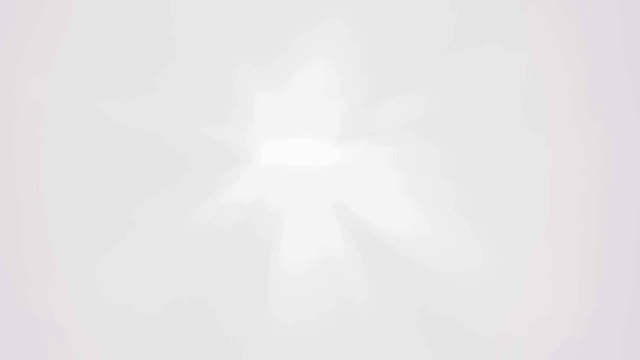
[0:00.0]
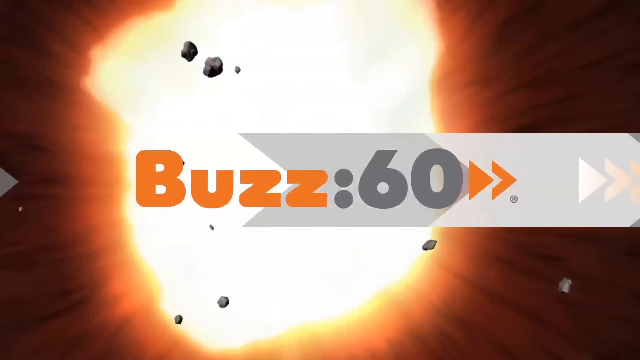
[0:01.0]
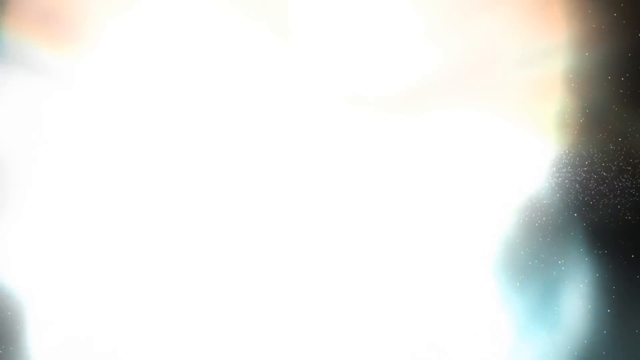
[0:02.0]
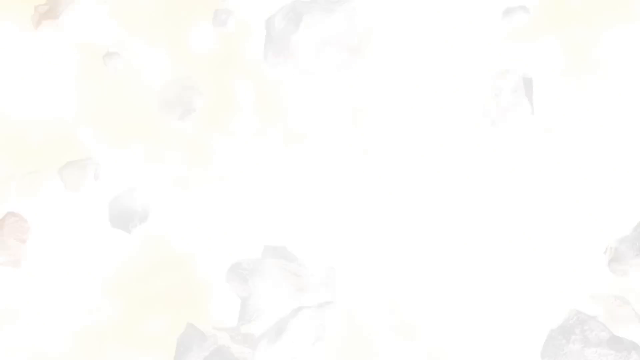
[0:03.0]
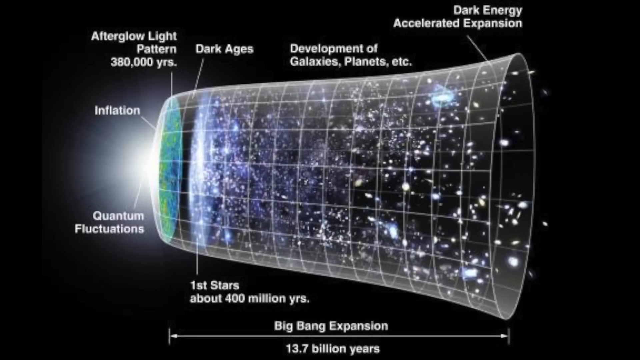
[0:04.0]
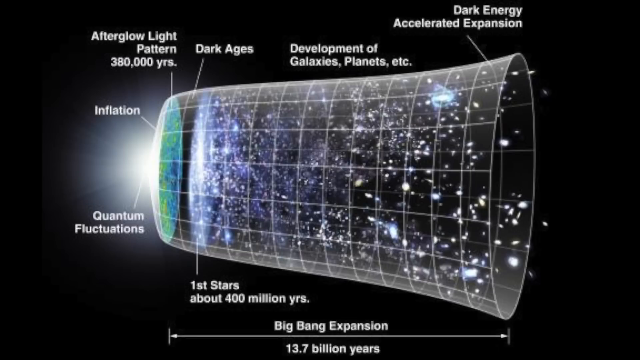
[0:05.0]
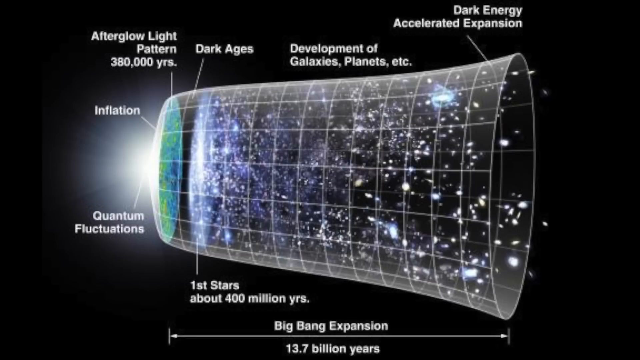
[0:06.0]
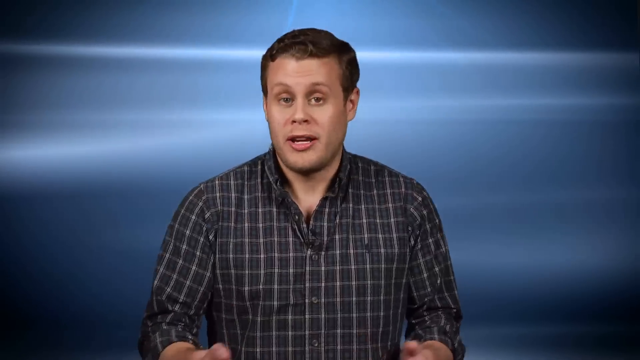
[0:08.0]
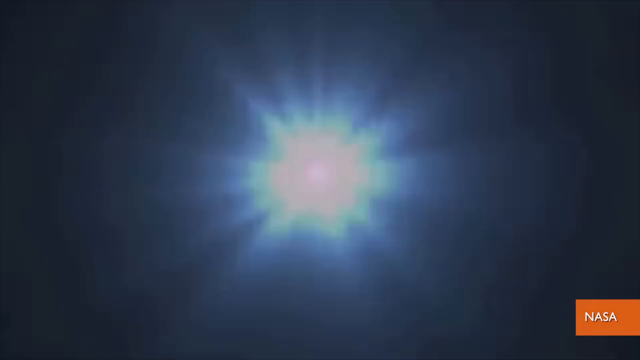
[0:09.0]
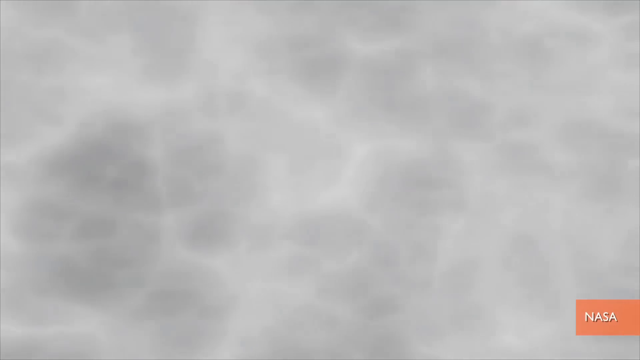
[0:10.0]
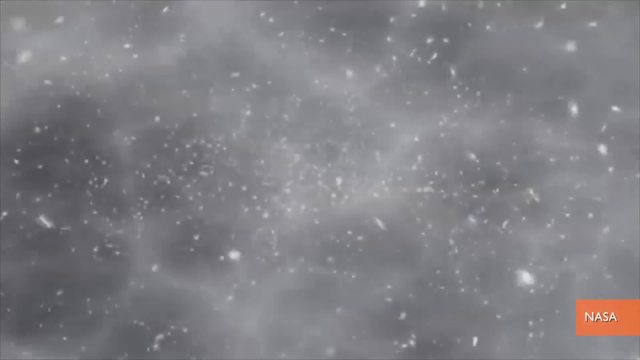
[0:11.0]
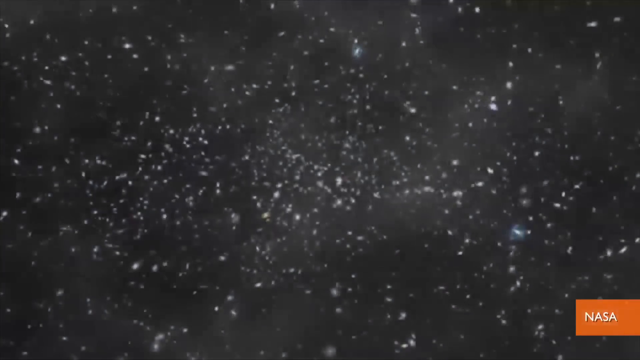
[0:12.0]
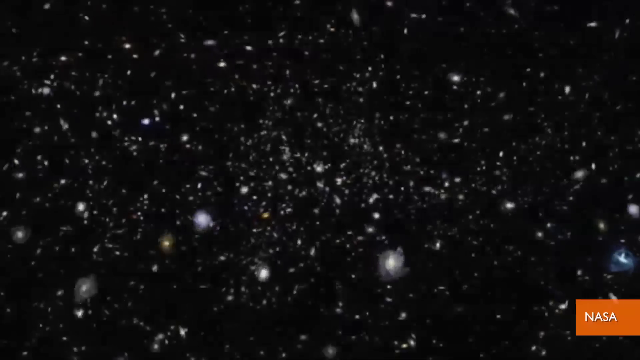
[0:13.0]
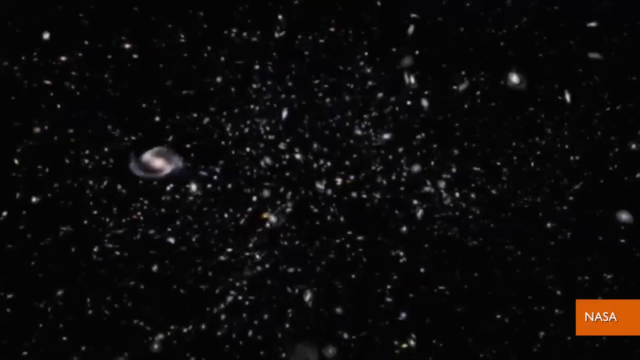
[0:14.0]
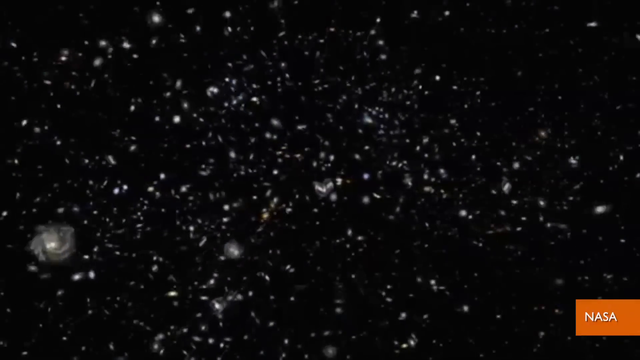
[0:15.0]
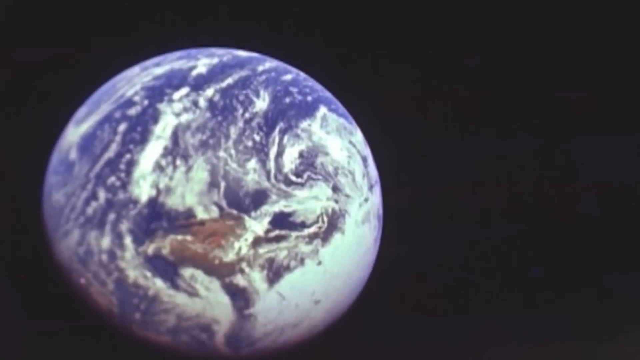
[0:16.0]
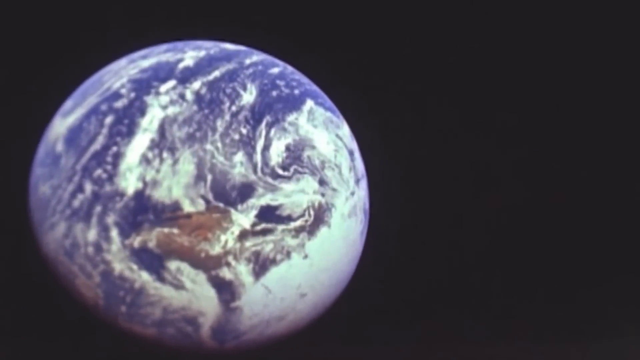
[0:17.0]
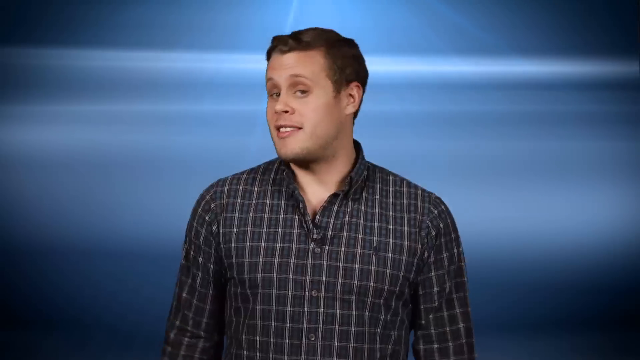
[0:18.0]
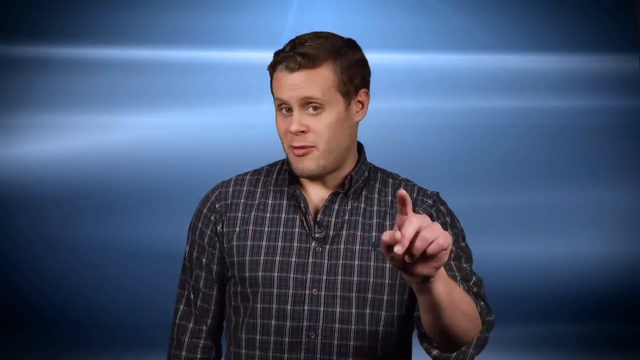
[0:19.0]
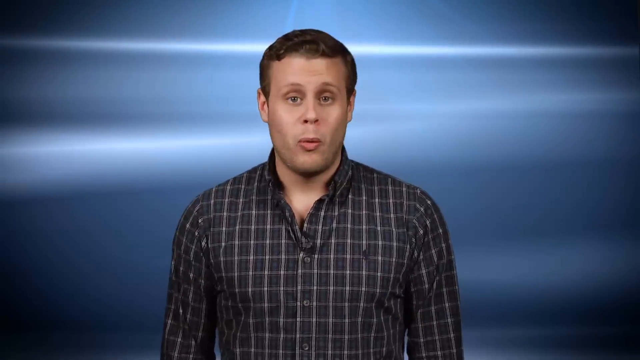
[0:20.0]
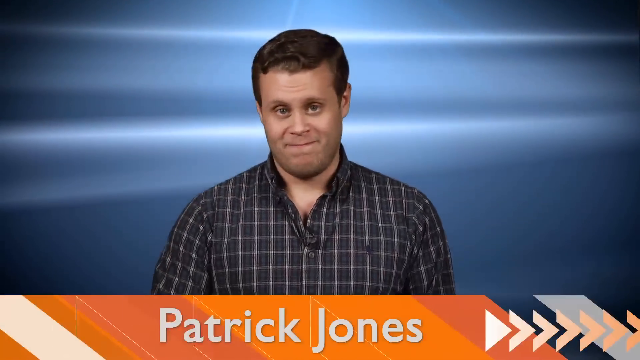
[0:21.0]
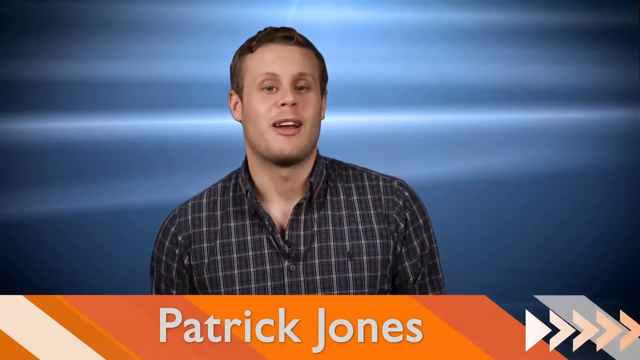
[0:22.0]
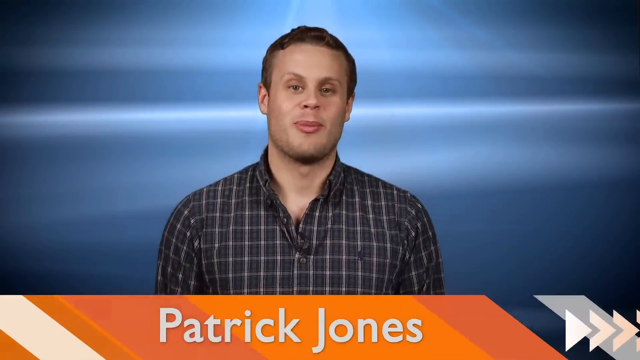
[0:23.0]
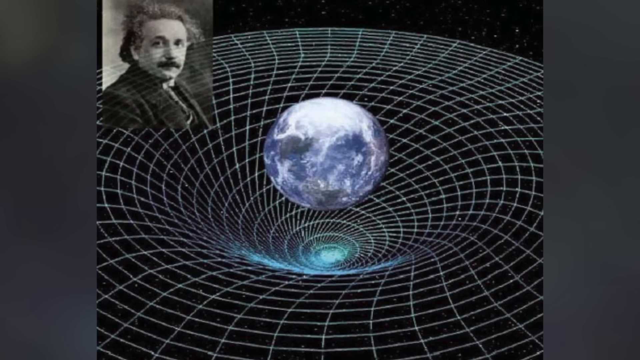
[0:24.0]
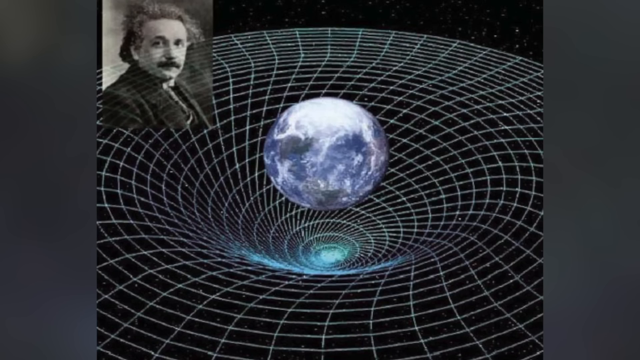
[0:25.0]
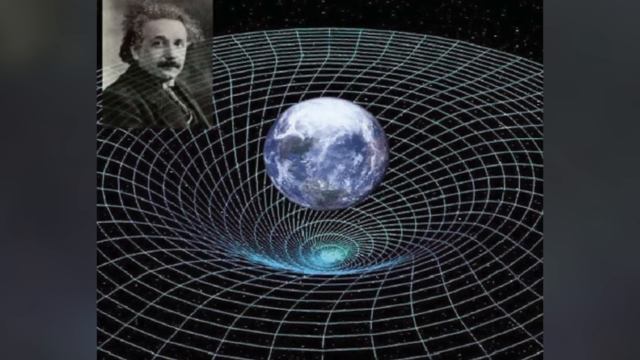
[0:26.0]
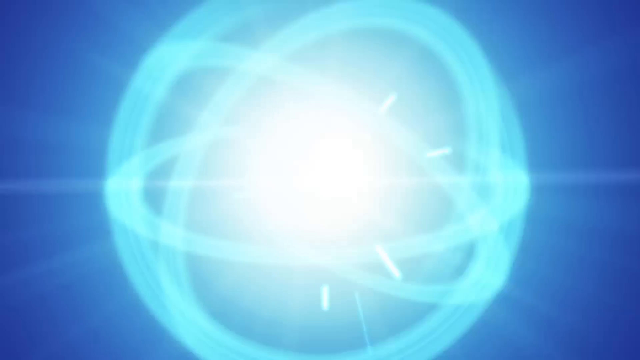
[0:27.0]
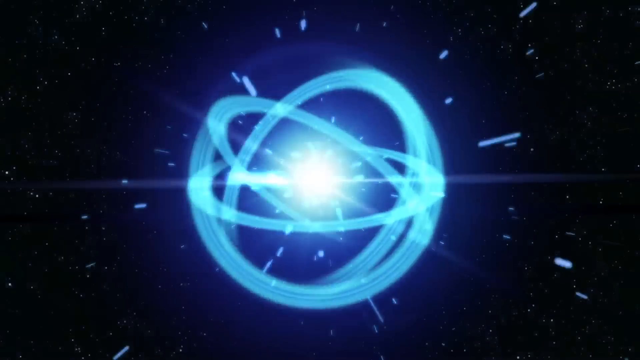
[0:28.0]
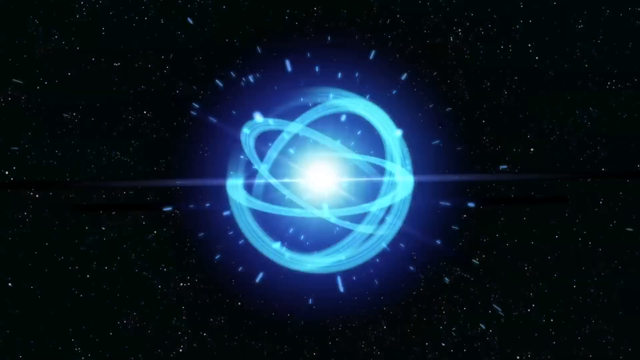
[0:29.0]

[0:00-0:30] The video comes via Buzz 60, and the Buzz 60 logo, which looks like an orange arrow, flashes across the screen. Next comes what looks to be an image of an explosion, followed by what appears to be a diagram showing some sort of development of the universe. The diagram shows what looks almost like a funnel or tubular-shaped structure, a cone that branches out, with its left side depicted in very bright light. At the end of the cone the text reads "inflation," and there is also the label "quantum fluctuations." Other labels point to different areas of the structure, moving from left to right, apparently from the beginning to later periods: "afterglow light pattern, 380,000 years," "dark ages," "first stars, about 400 million years," "development of galaxies, planets, etc.," and finally "dark energy, accelerated expansion." The video then cuts to a man speaking in front of a blue, somewhat animated wall, and images of space and the planet Earth appear. His name appears to be Patrick Jones.